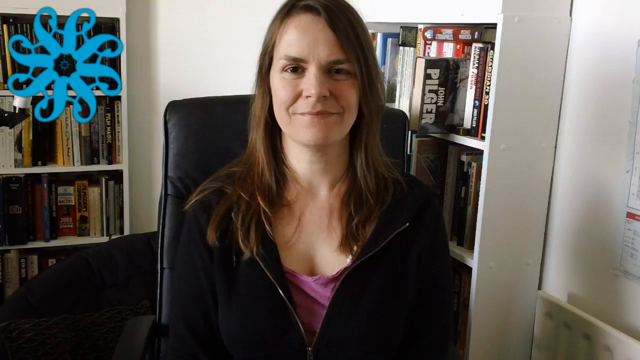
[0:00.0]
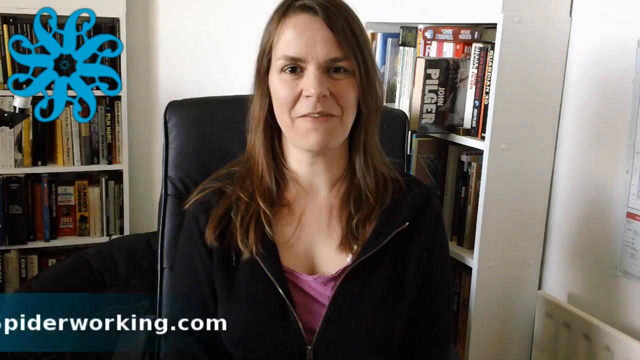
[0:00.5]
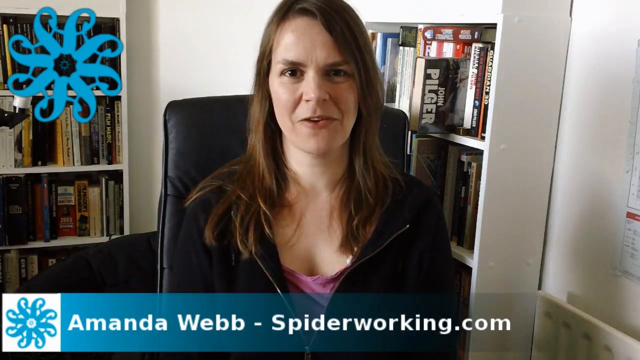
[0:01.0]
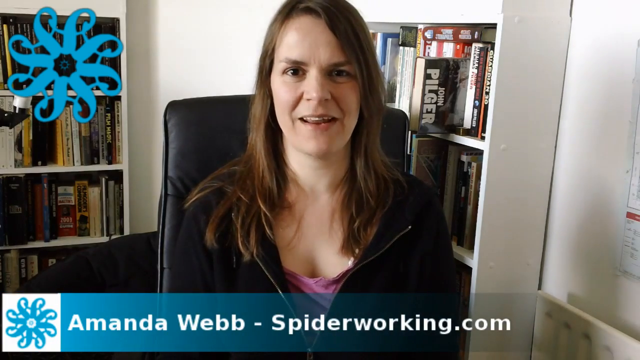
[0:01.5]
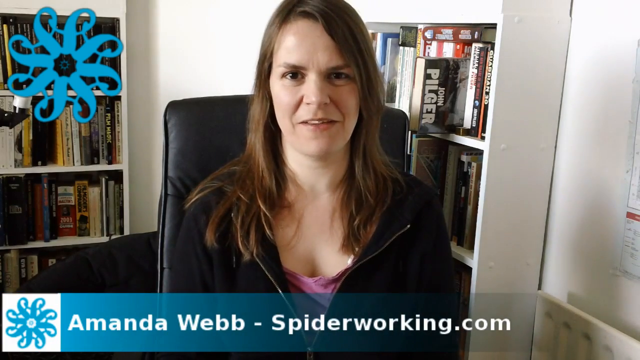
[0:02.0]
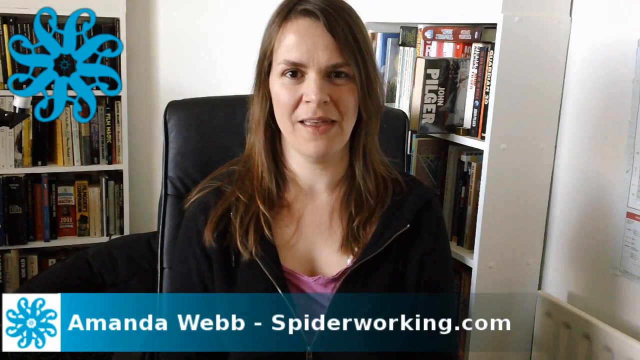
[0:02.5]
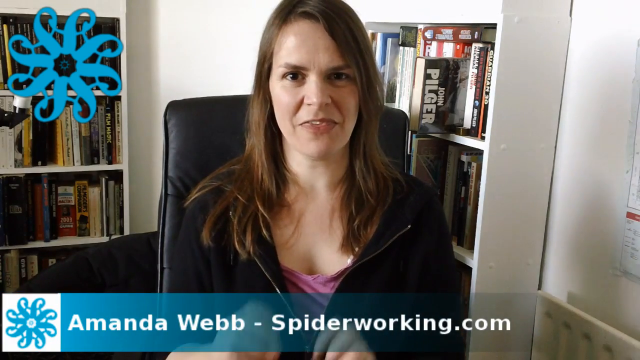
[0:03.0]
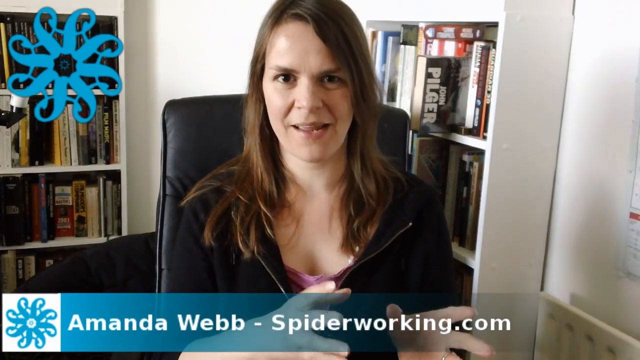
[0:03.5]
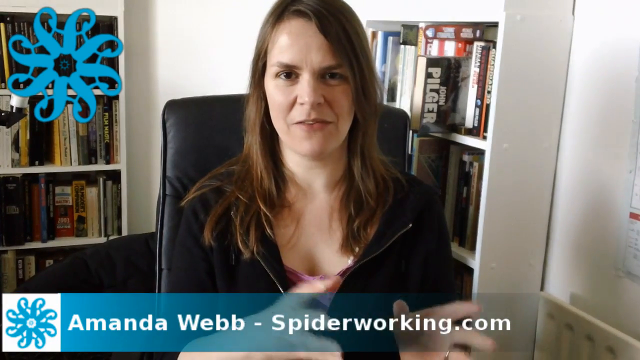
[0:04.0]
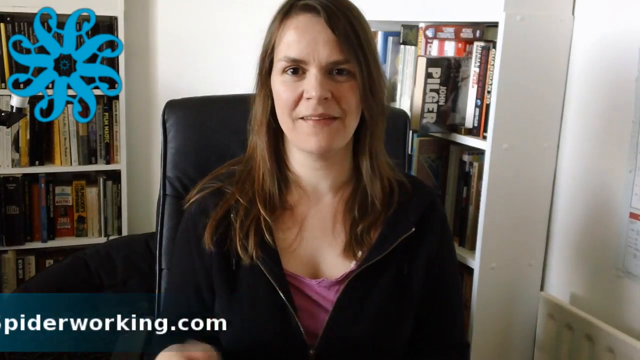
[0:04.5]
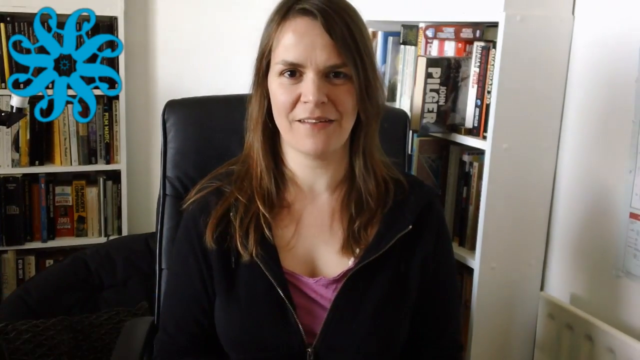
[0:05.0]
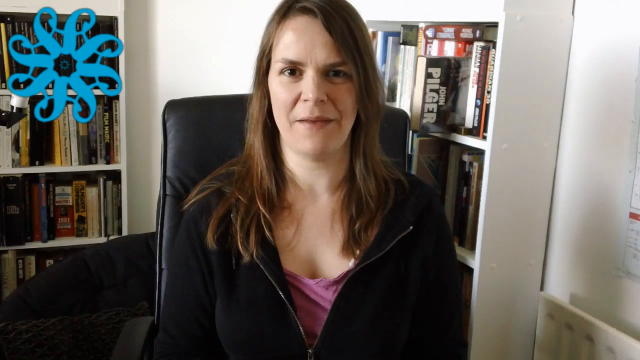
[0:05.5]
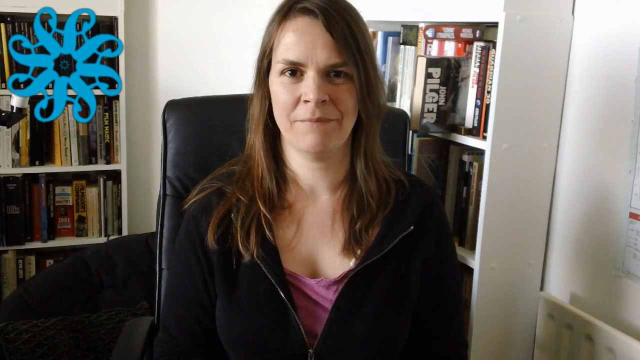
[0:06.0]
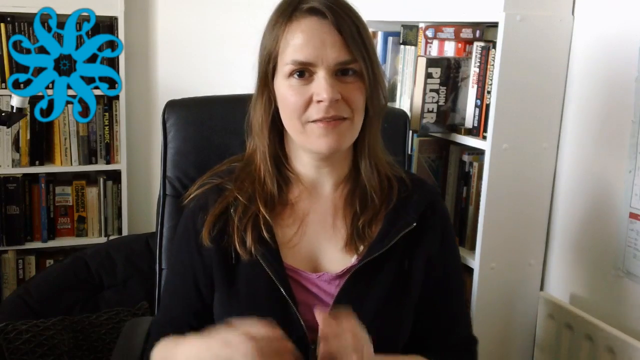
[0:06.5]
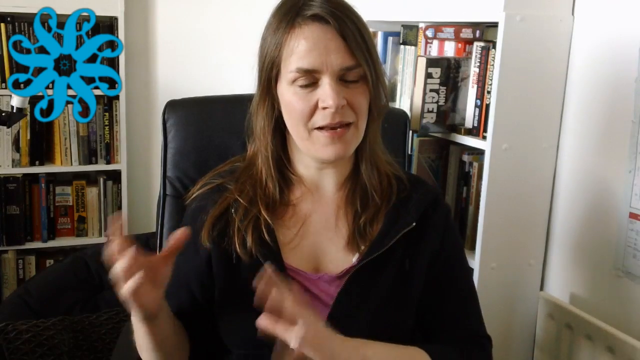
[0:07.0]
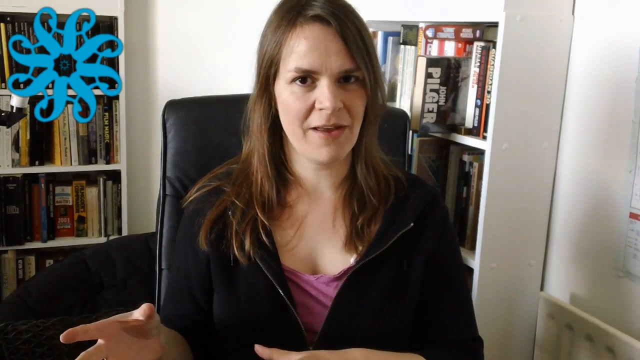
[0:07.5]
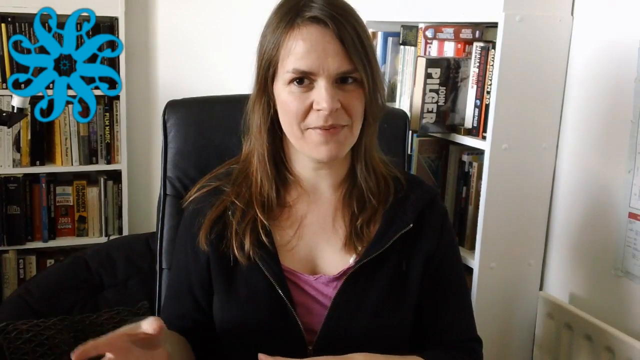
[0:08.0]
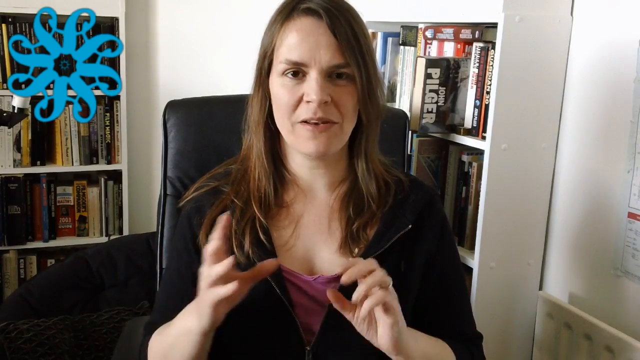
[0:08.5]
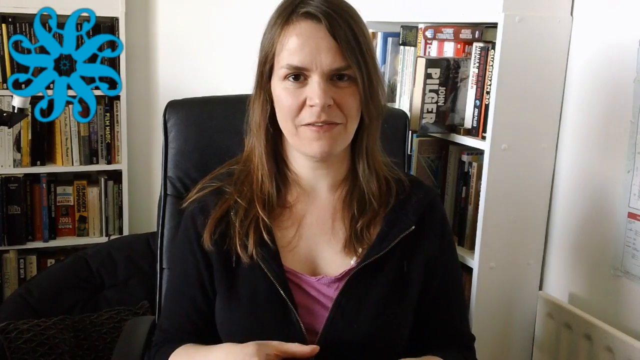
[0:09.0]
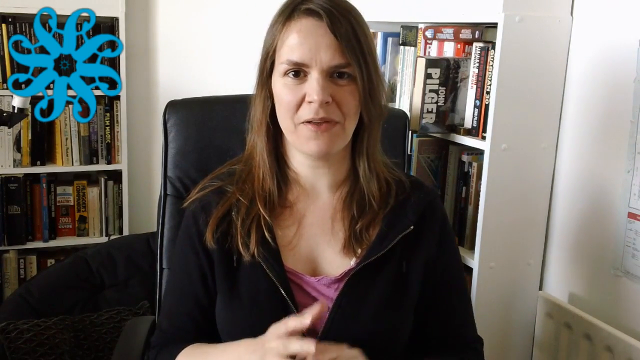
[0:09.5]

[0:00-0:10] Amanda, from spiderwaking.com, appears on screen in an office, wearing a black jacket with a purple top underneath and talking. Text on the page includes "spiderwaking.com", "Crime and Law", "the Irish Times", "news" and "sports". A test page shows animals on the screen.